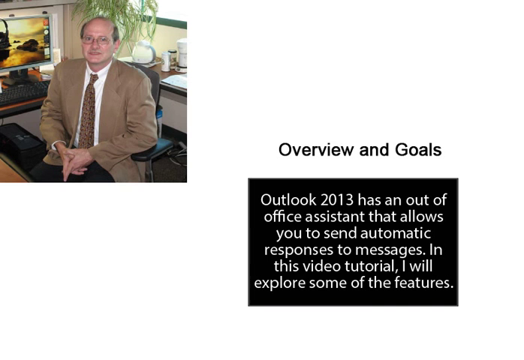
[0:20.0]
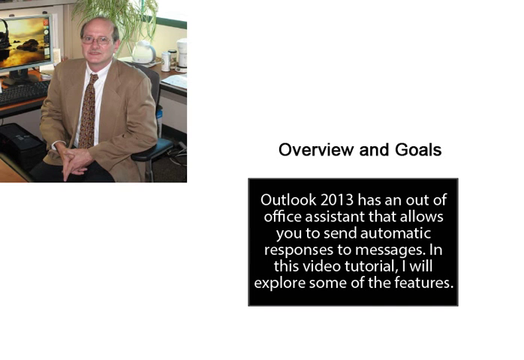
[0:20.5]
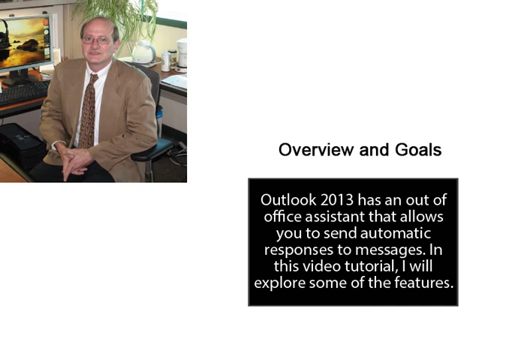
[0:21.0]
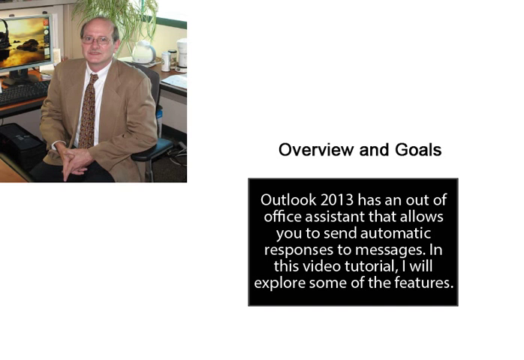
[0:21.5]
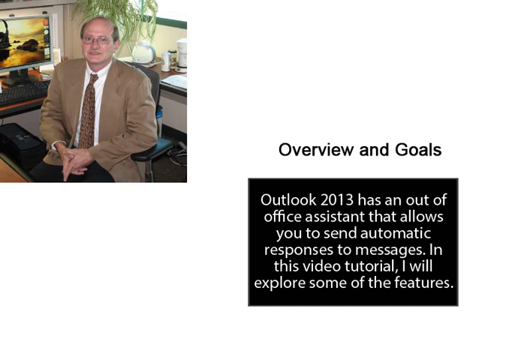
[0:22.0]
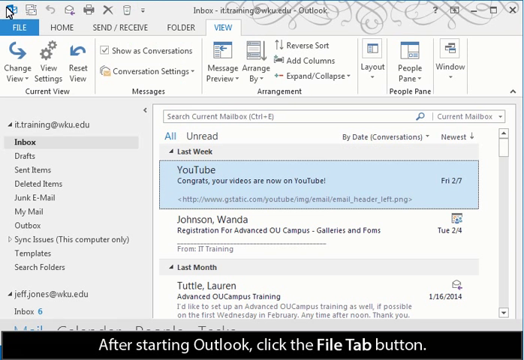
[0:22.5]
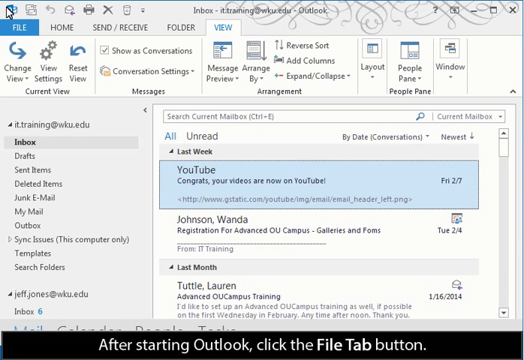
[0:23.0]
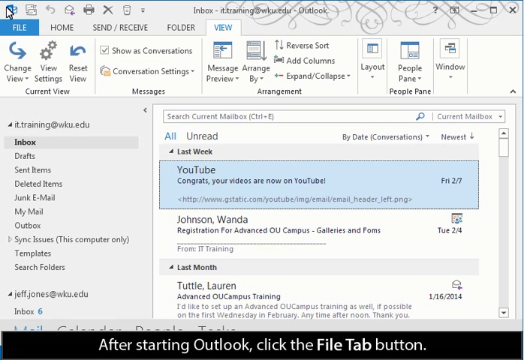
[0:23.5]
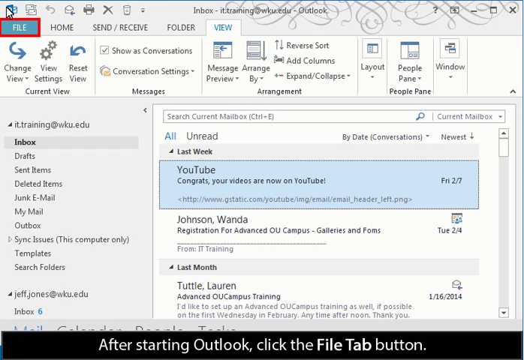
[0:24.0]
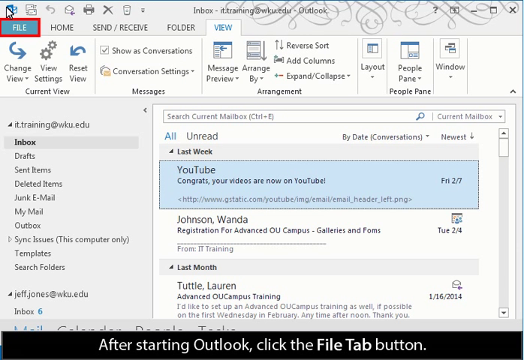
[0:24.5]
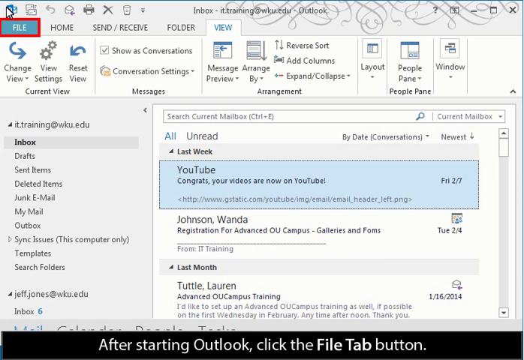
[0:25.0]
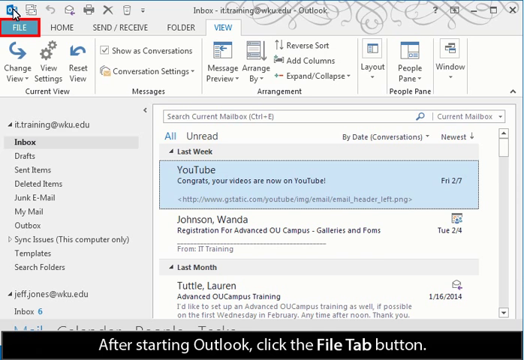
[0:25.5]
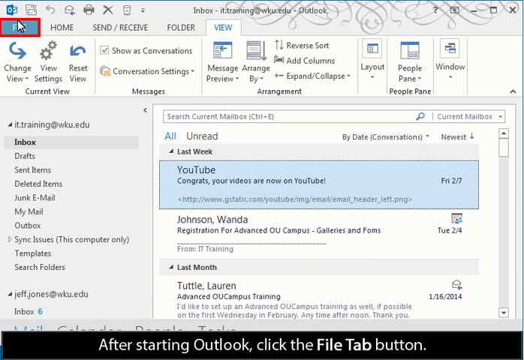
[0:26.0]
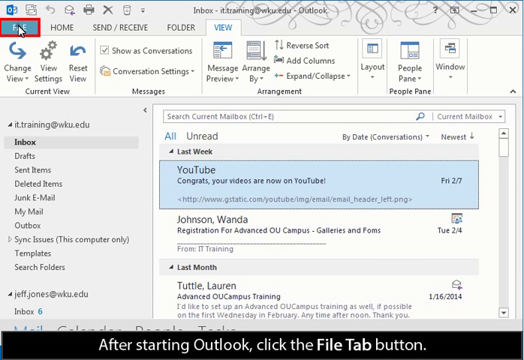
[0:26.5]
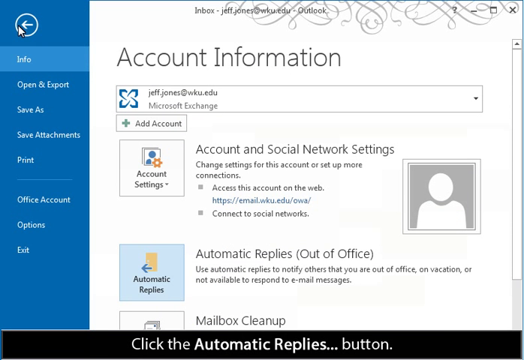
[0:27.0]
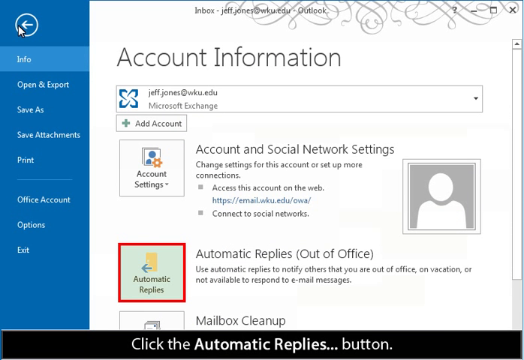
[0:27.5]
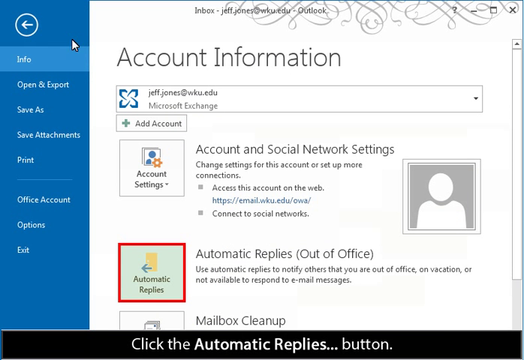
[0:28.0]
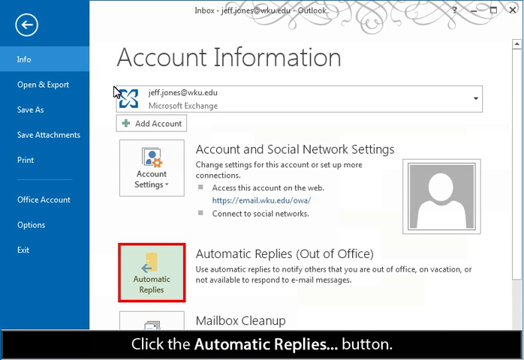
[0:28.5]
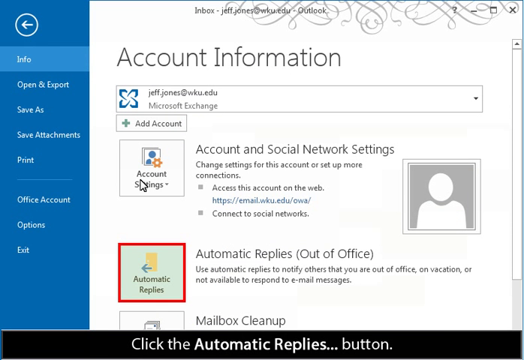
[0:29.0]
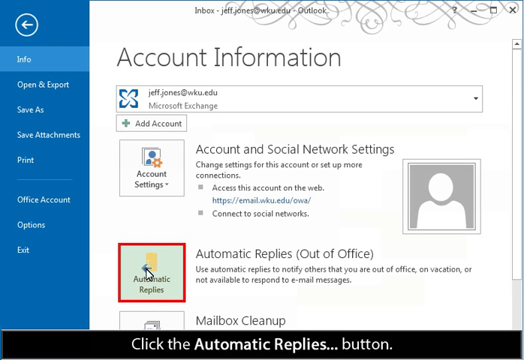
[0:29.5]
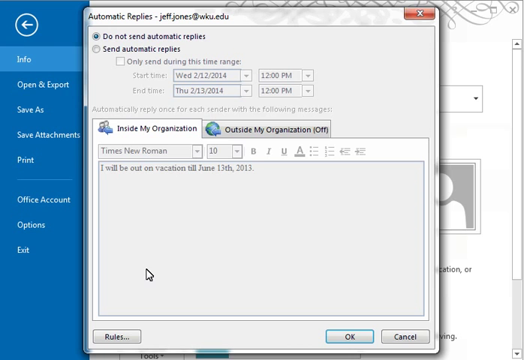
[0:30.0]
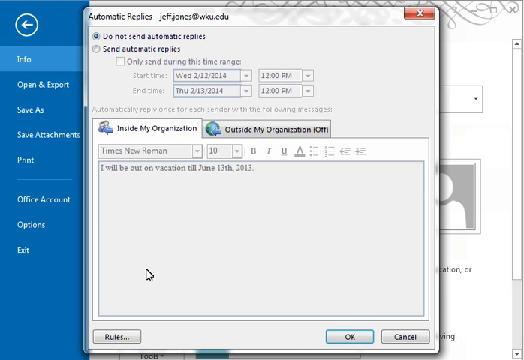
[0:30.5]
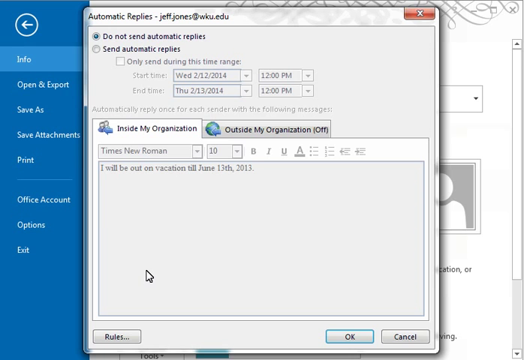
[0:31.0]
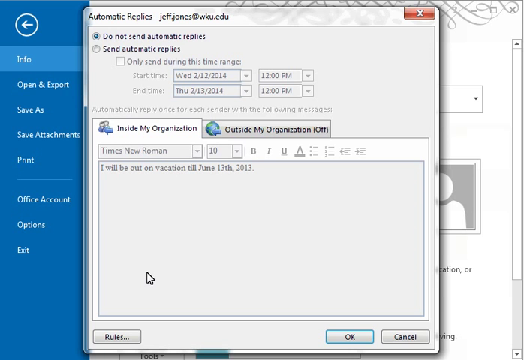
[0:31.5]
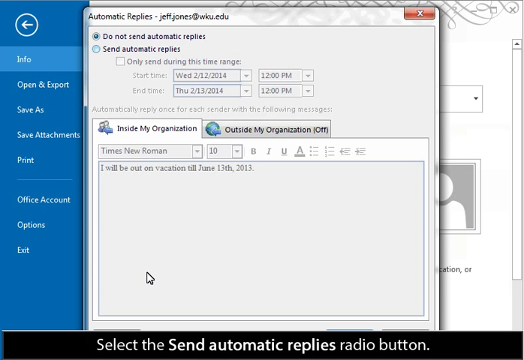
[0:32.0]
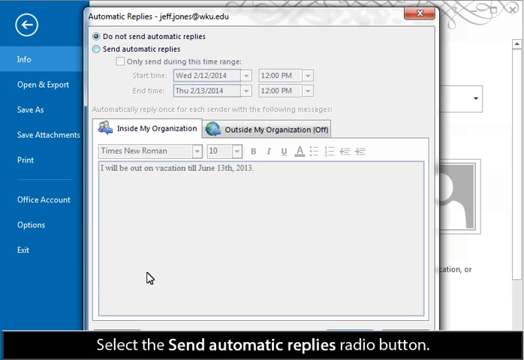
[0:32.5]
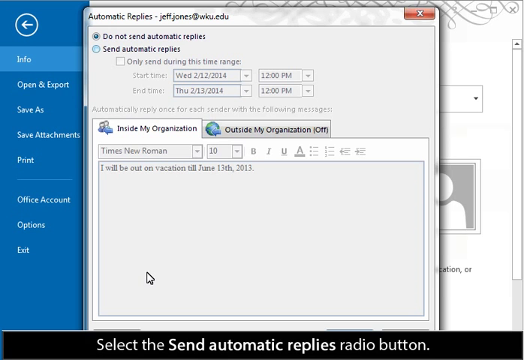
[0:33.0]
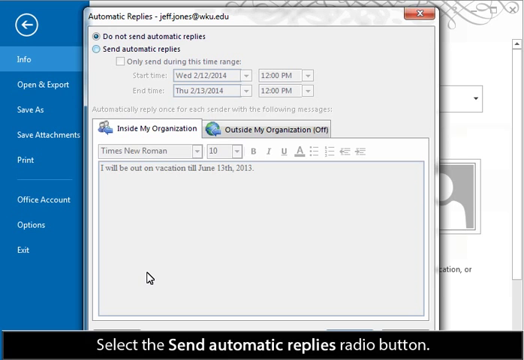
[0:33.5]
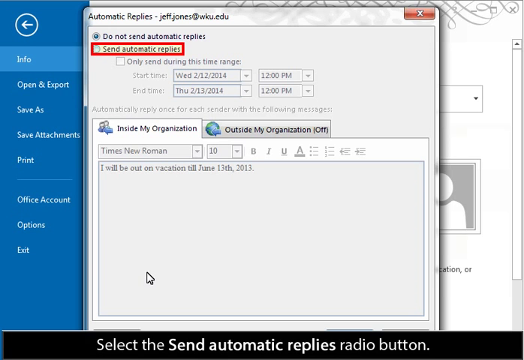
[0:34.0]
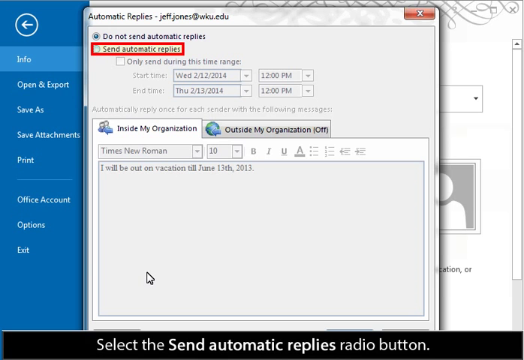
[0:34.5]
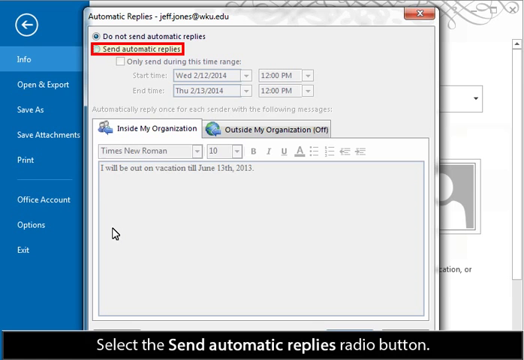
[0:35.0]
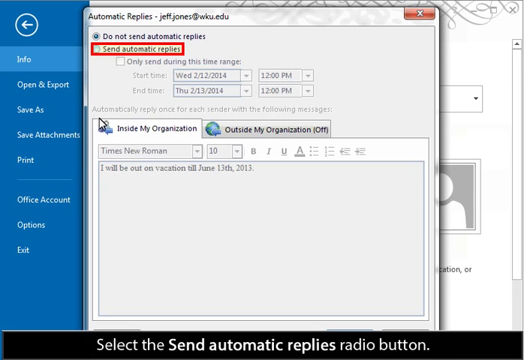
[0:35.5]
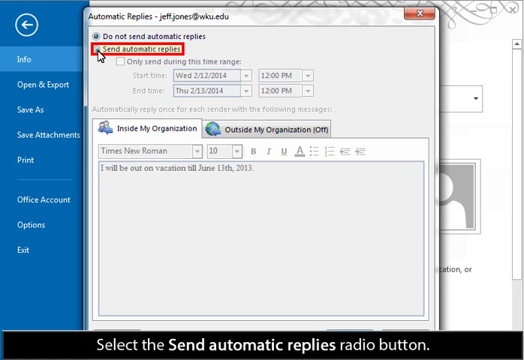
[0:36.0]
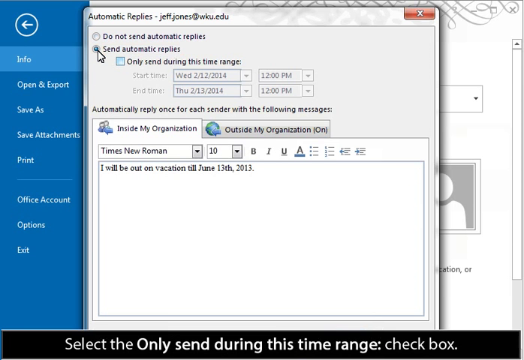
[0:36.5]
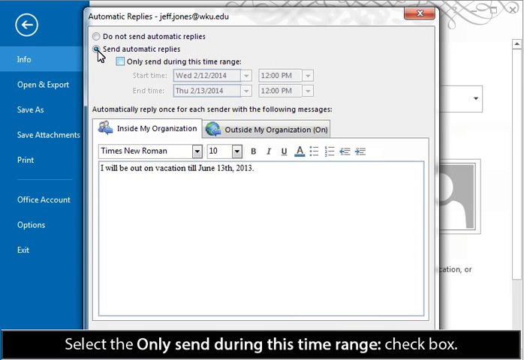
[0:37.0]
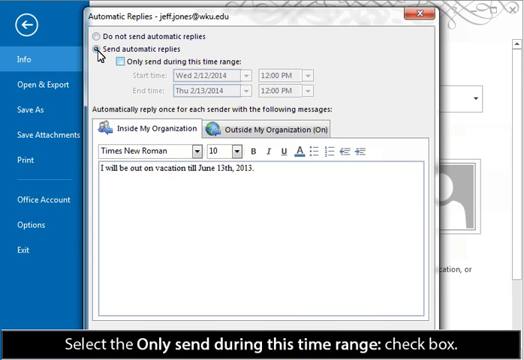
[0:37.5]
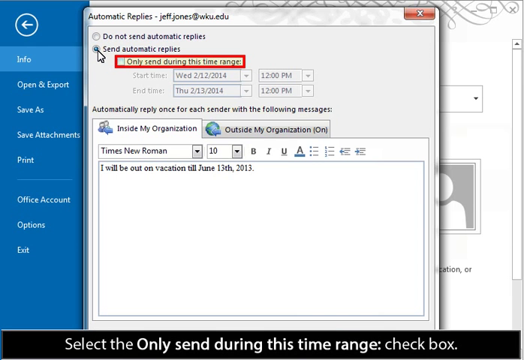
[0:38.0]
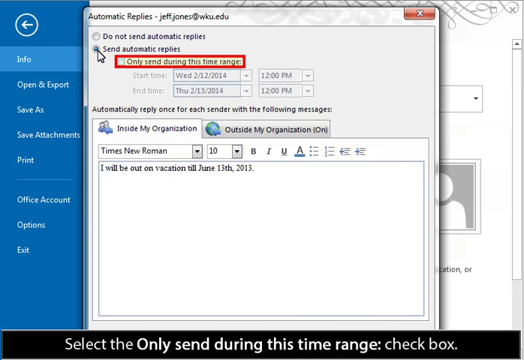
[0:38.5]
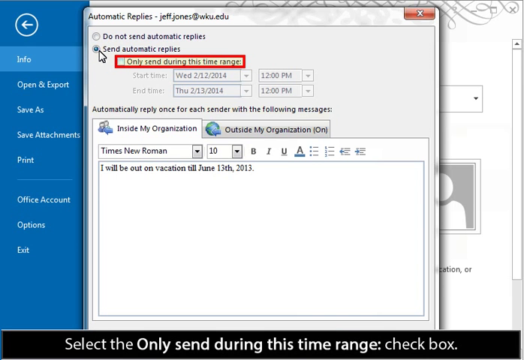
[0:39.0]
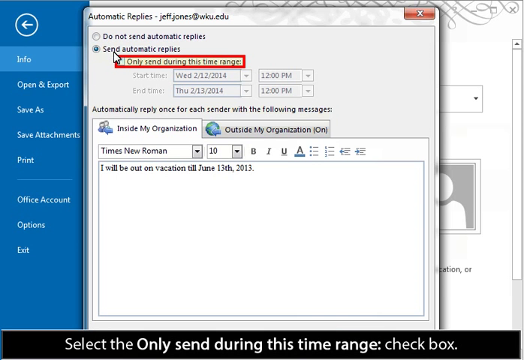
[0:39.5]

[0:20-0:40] A computer screen shows information, with a square in the upper left corner containing the image of a man. He sits on a black chair at a desk, wearing a brown suit jacket, a darker brown tie and a white dress shirt, with his hands folded on the desk in front of him. He looks straight ahead; he has brown hair around his ears, is bald on top of his head, wears glasses and has a slight mustache. To his left is a computer monitor that is on, showing a water scene at sunset, and behind him there is a plant sitting on a window sill. In the lower left corner is a black box with text. Over the box it says "Overview and Goals," and inside it reads "Outlook 2013 has an out of office assistant that allows you to send automatic responses to messages. In this video tutorial, I will explore some of the features."